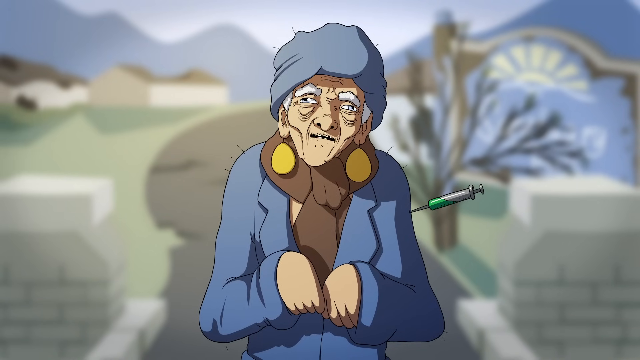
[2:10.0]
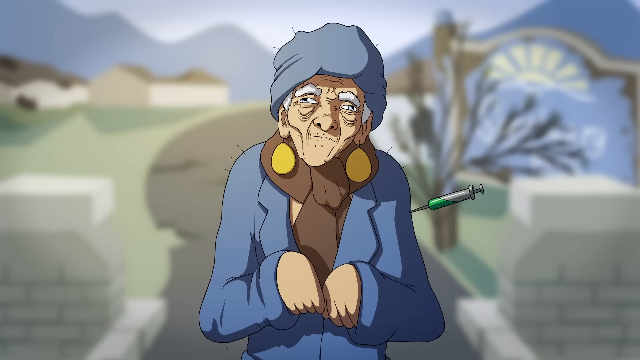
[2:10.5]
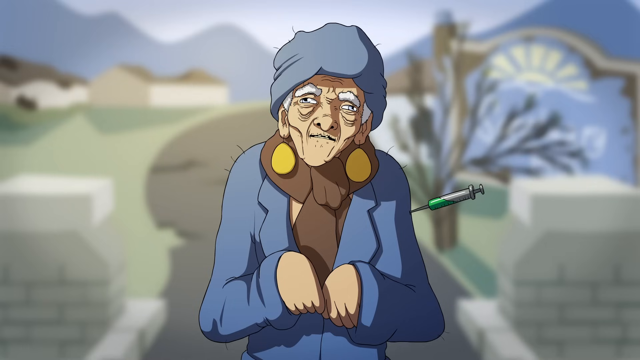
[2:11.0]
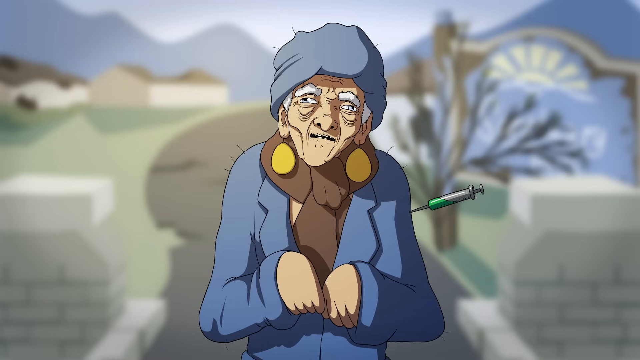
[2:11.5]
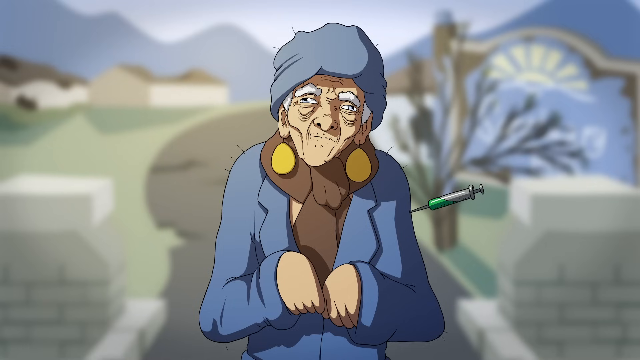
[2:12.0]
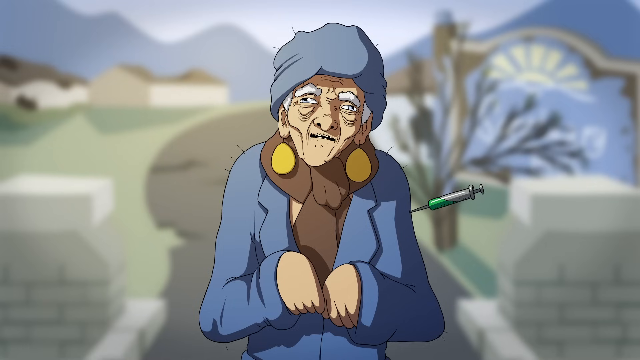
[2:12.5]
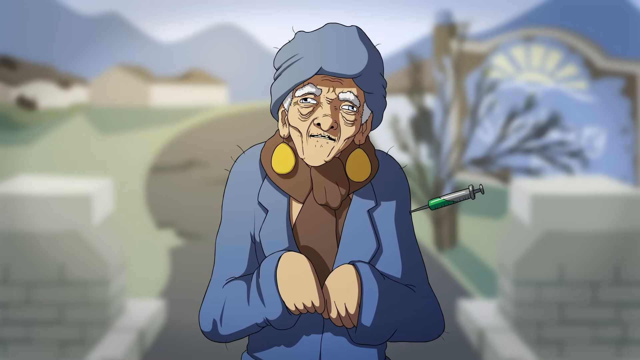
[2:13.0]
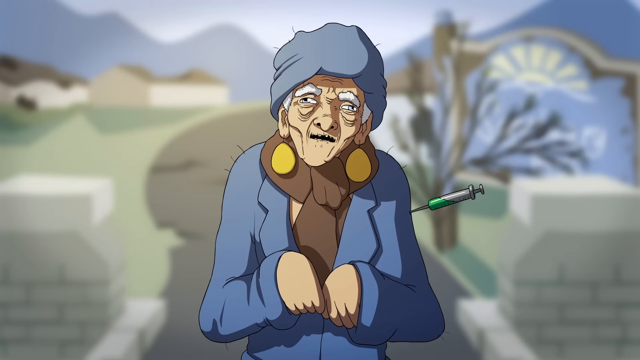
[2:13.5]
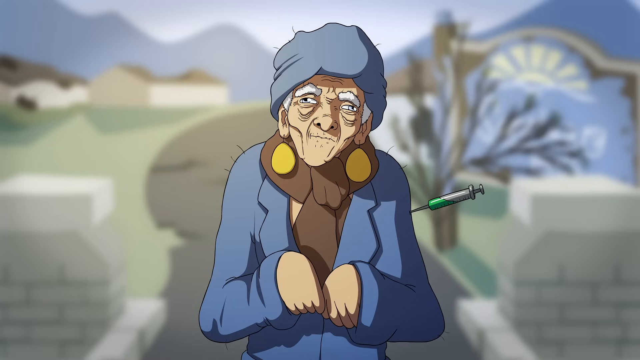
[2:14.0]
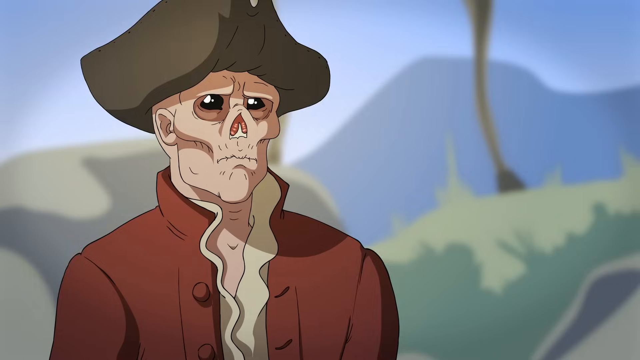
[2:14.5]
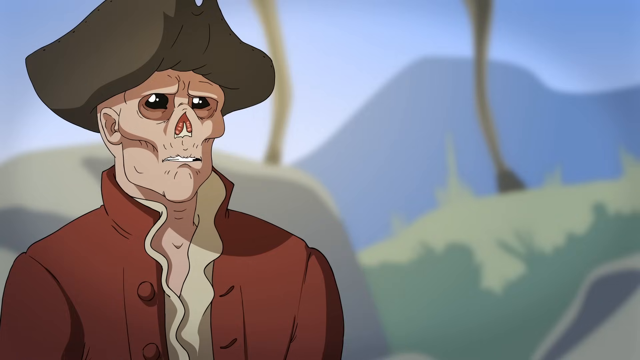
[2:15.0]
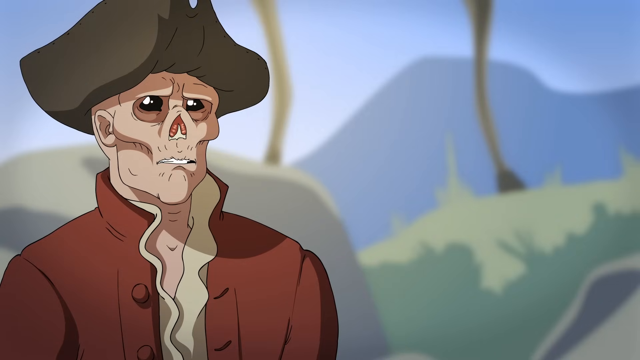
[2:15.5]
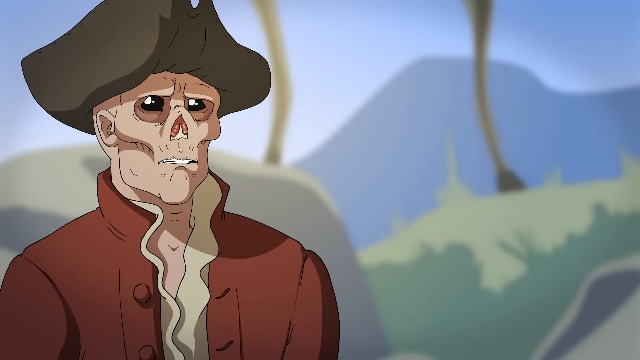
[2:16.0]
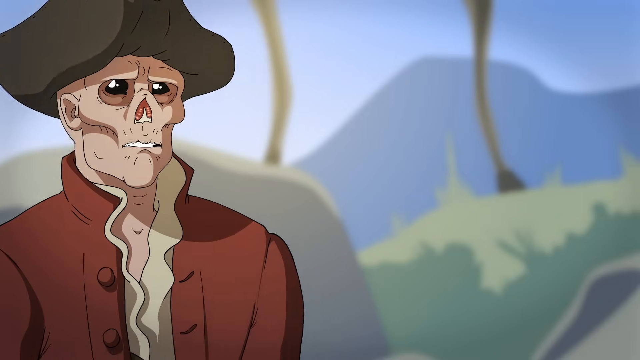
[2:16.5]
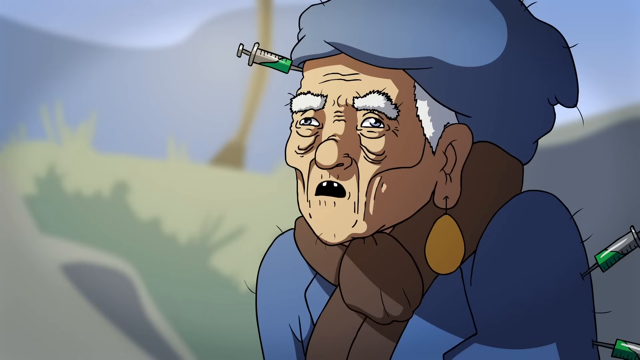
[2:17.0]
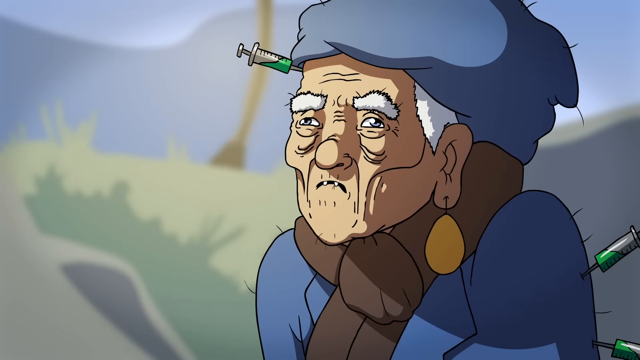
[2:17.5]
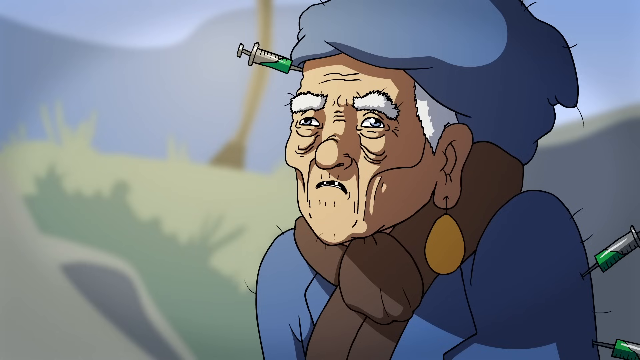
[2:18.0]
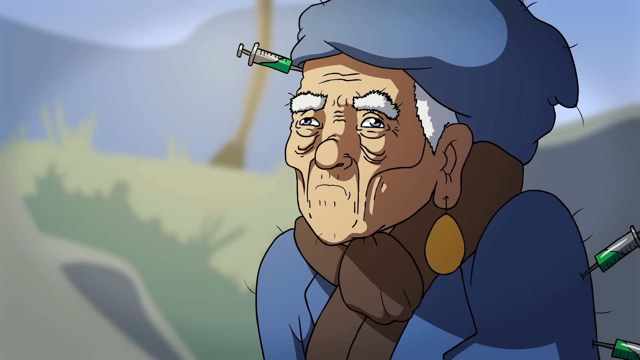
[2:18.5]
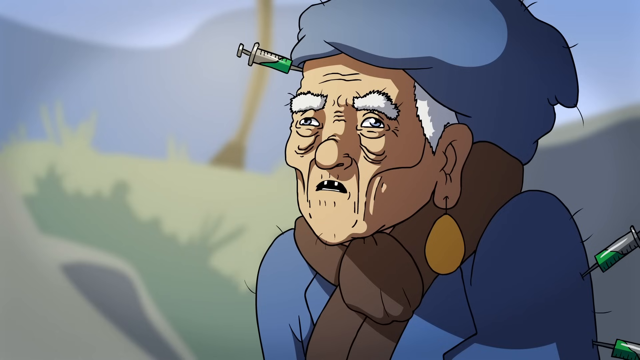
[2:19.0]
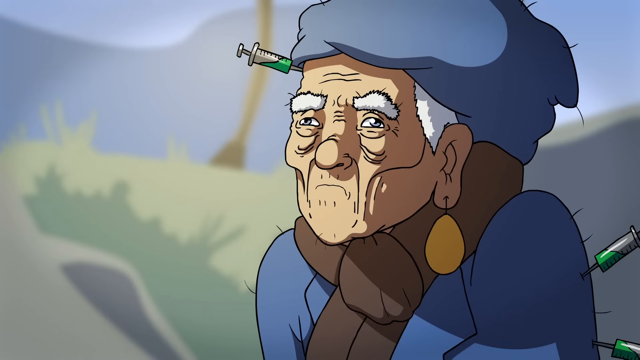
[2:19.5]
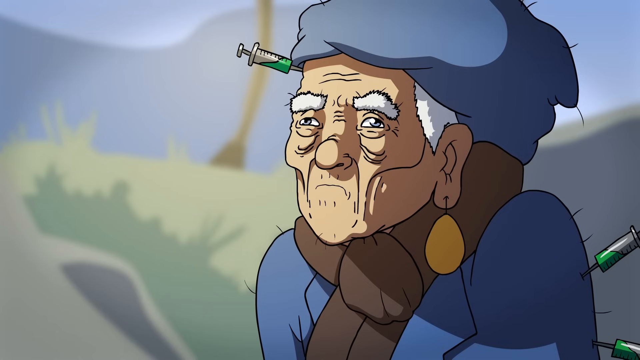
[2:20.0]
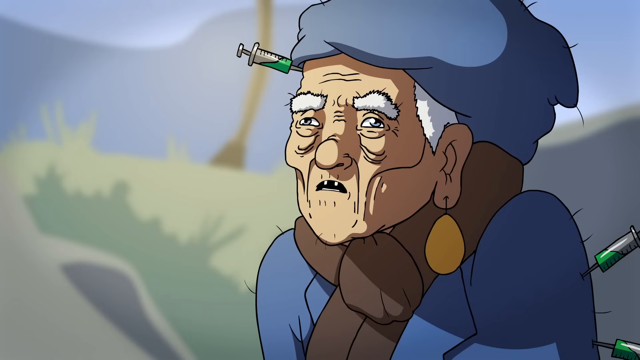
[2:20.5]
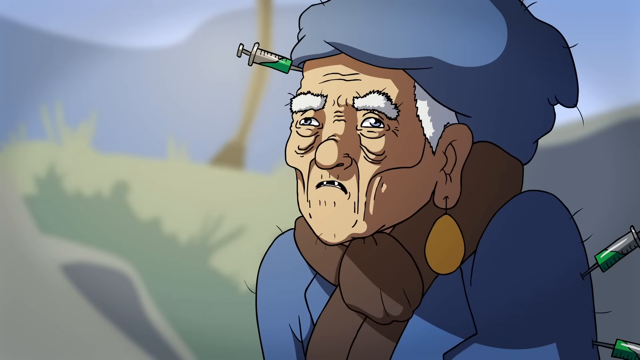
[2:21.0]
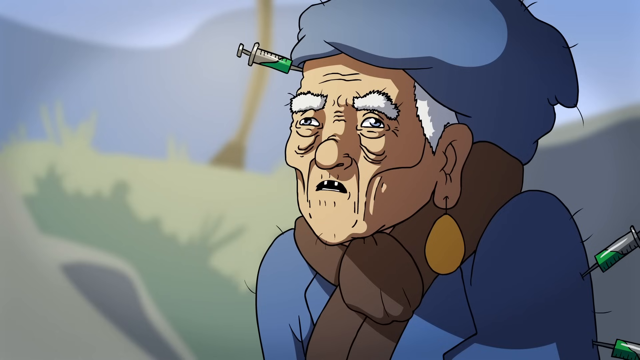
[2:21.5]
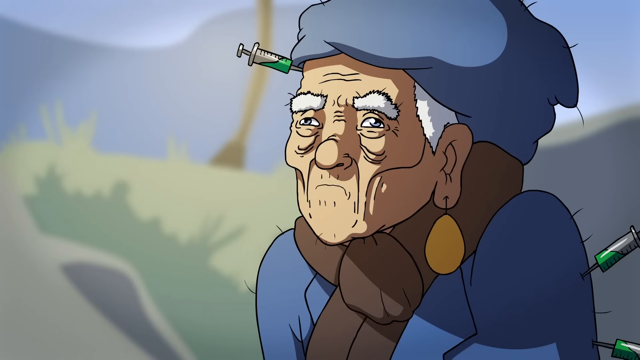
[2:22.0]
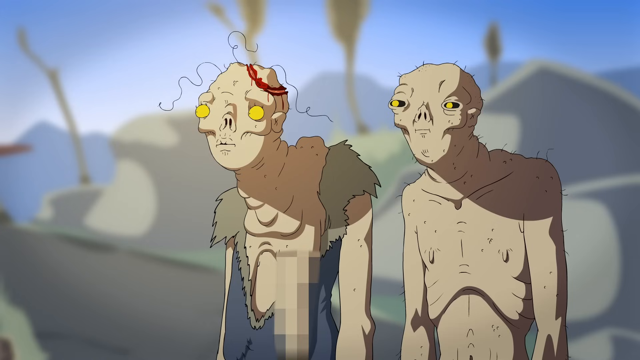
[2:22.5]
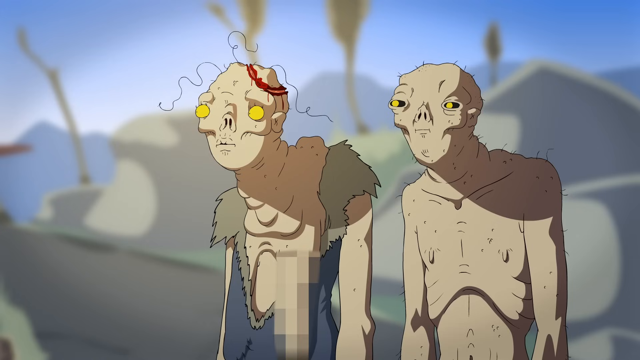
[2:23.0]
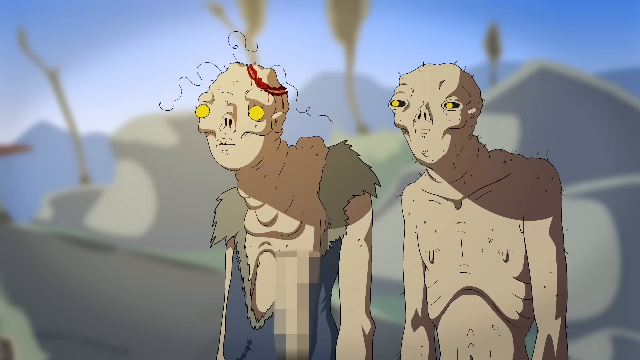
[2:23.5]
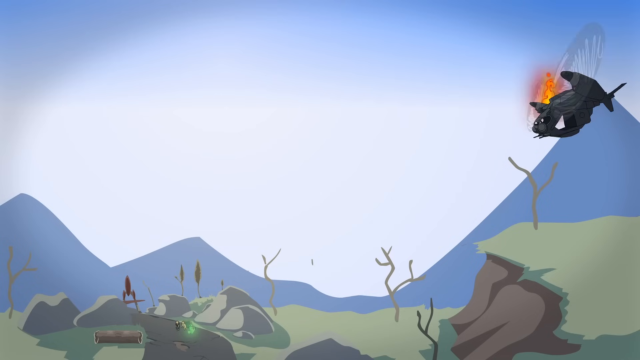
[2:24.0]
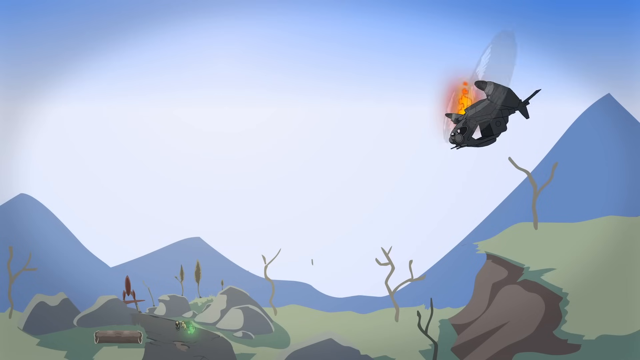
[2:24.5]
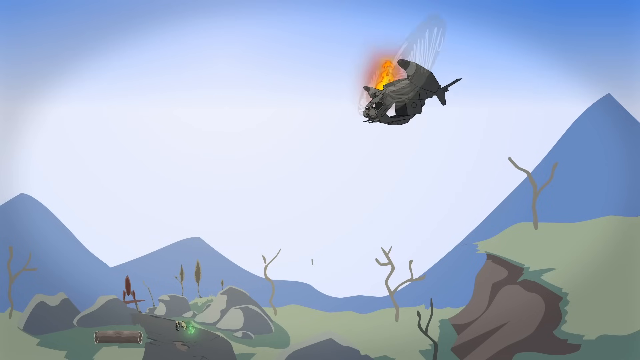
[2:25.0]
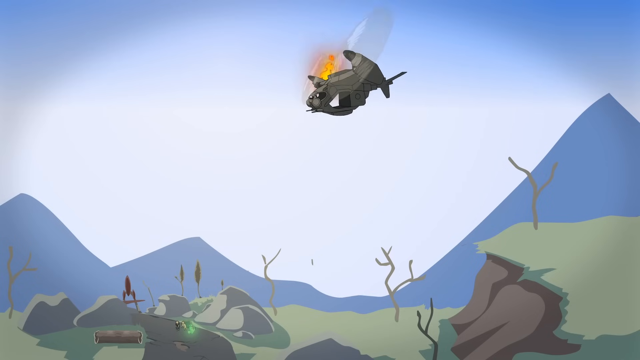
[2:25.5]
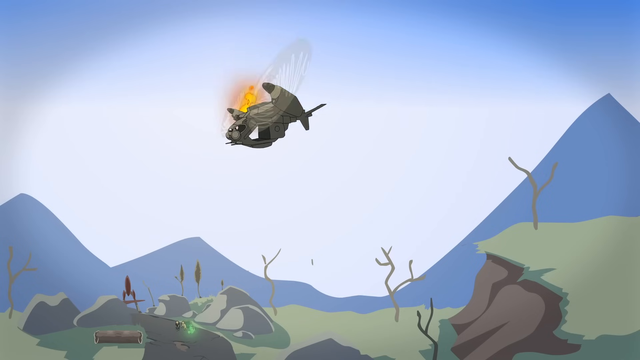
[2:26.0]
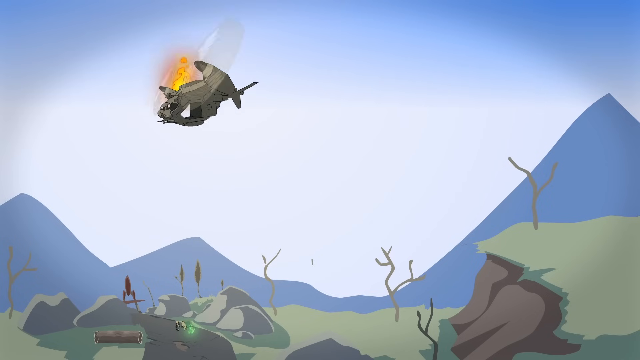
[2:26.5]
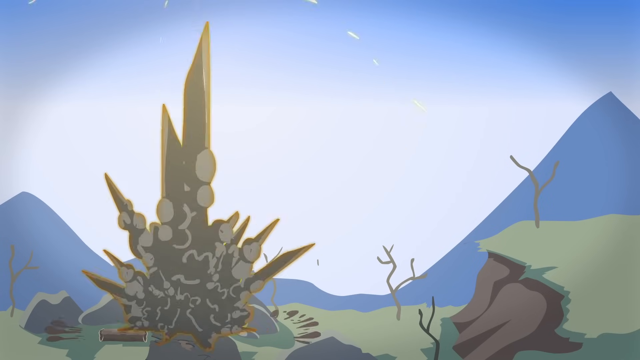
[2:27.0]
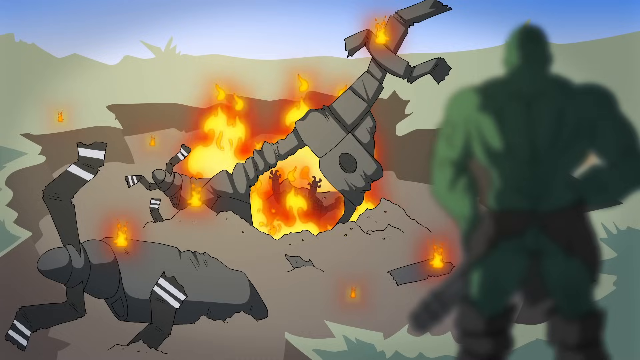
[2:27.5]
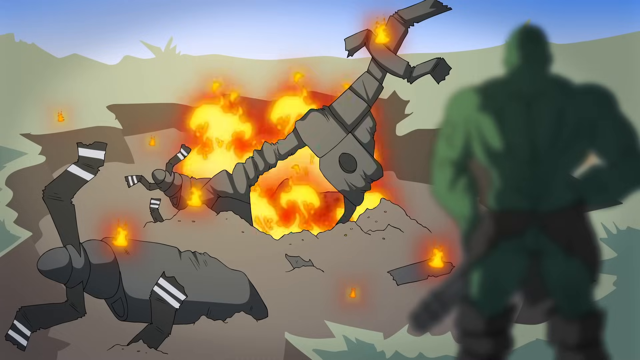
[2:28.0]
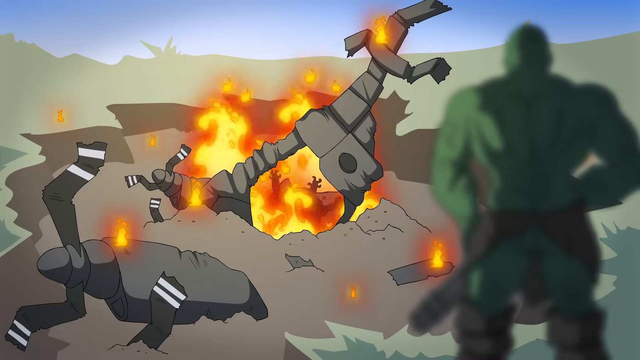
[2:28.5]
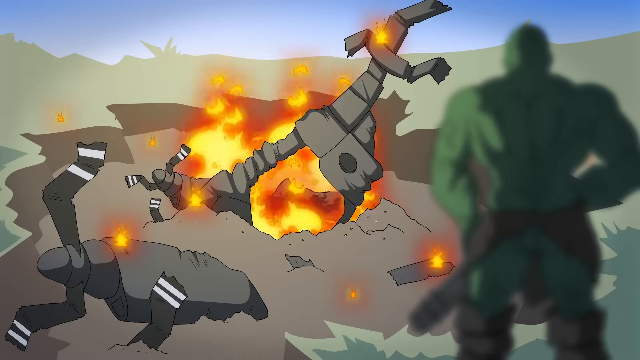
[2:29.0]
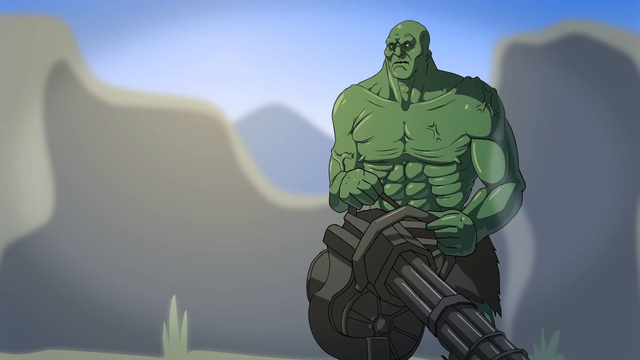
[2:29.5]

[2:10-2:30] A woman stands with both hands folded in front of her, as if holding a purse. She wears a blue coat, a brown scarf and a blue cloth wrapped around her head. A syringe sticks out of her left arm, about half full of green liquid. She speaks, and the pirate man missing his nose backs up a little as he talks to her, stepping back as if afraid of her. As she talks, a syringe is also visible in the right side of her forehead. She has bright white, bushy eyebrows, white hair under her blue cap, and gold earrings that hang from her ears and look like big leaves. The zombie couple stands there; the woman in the dress still has her left breast hanging out of the dress, blurred out. A helicopter flies across the sky, apparently on fire, and crashes into the ground with a big explosion.